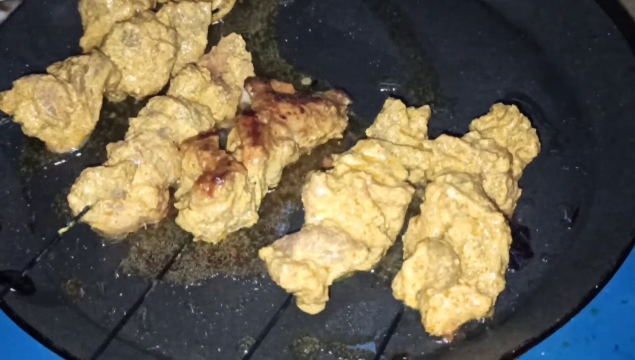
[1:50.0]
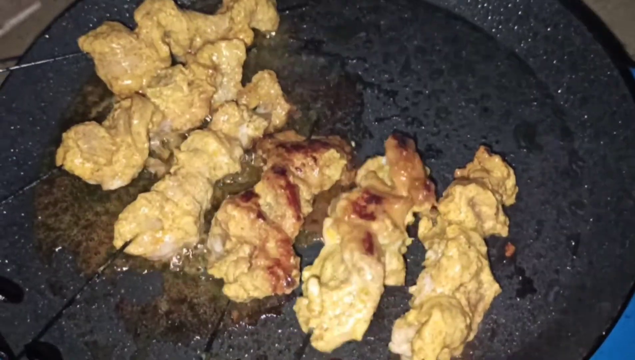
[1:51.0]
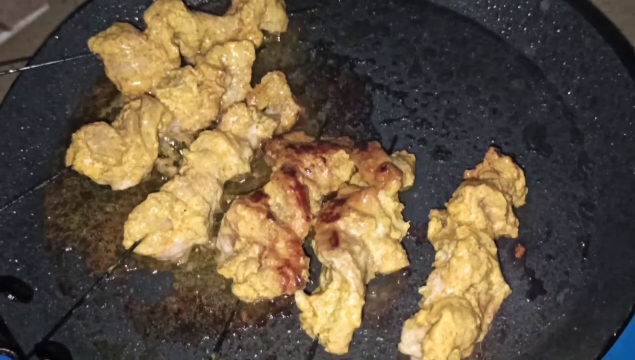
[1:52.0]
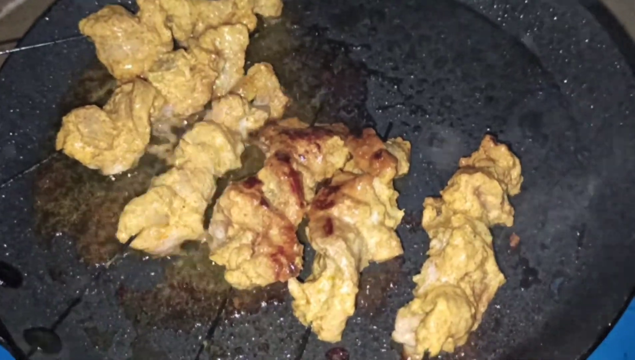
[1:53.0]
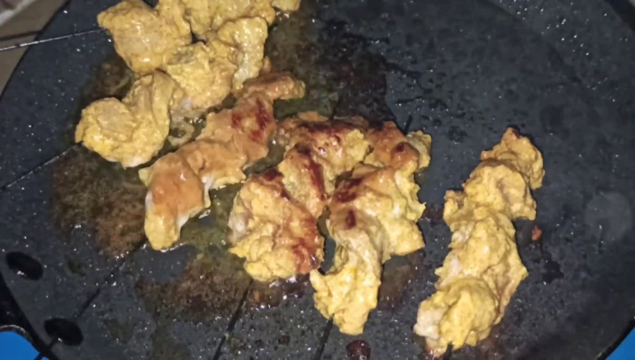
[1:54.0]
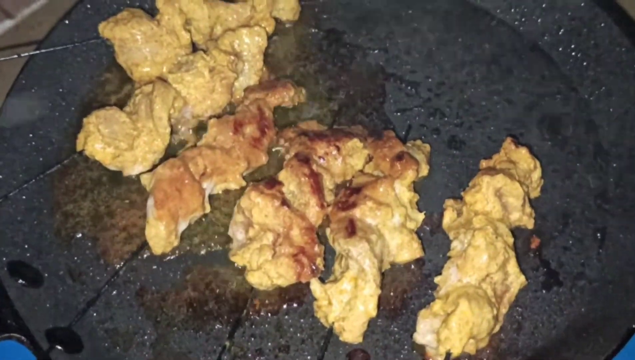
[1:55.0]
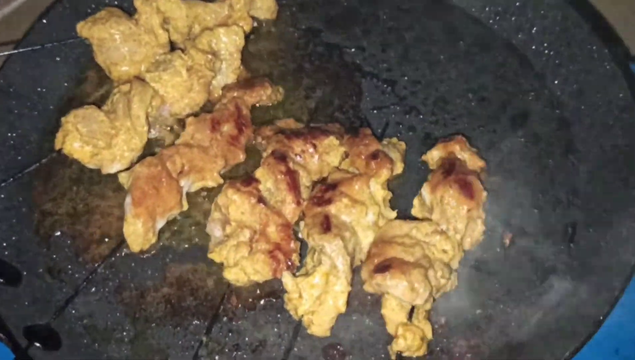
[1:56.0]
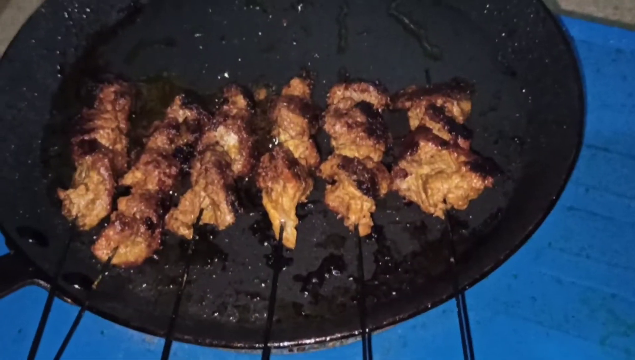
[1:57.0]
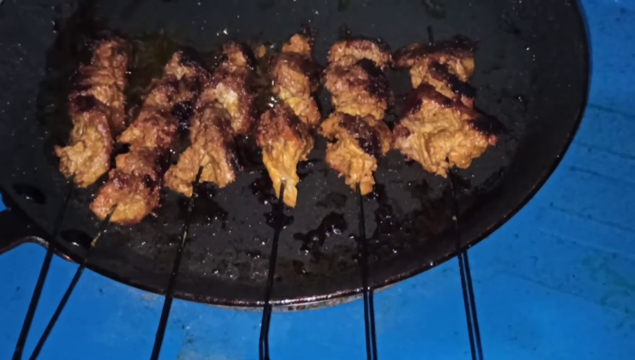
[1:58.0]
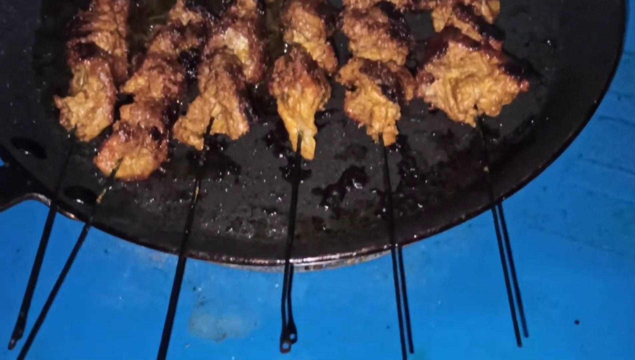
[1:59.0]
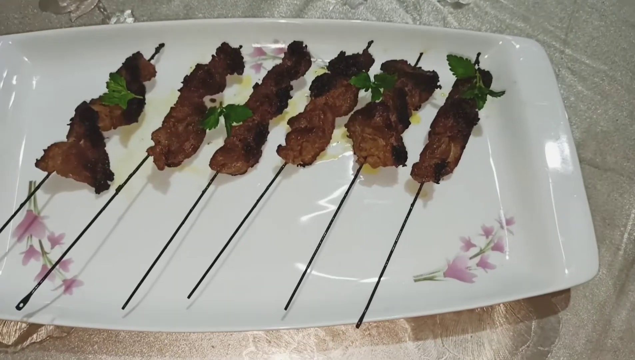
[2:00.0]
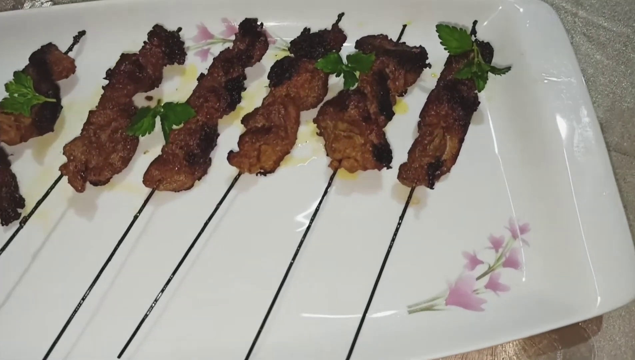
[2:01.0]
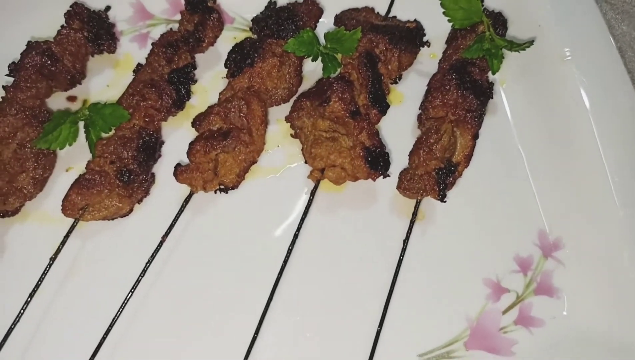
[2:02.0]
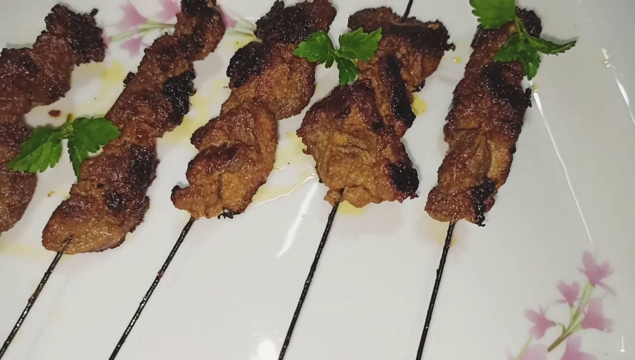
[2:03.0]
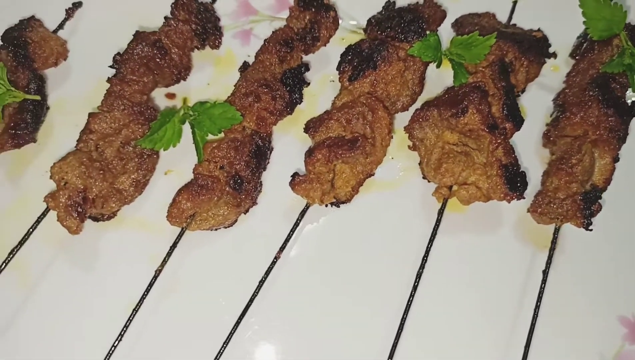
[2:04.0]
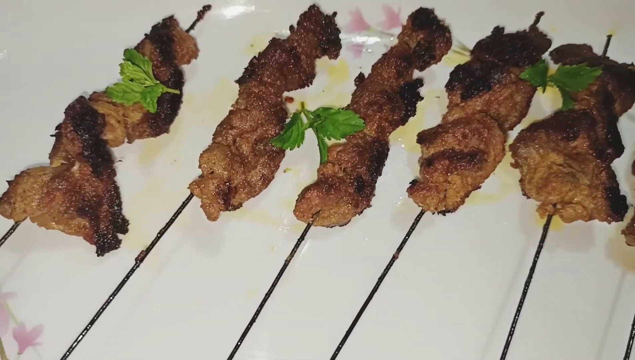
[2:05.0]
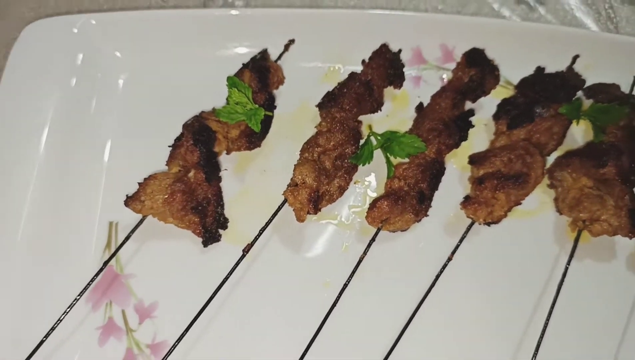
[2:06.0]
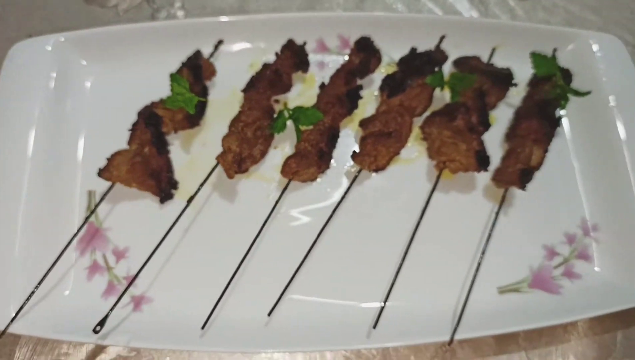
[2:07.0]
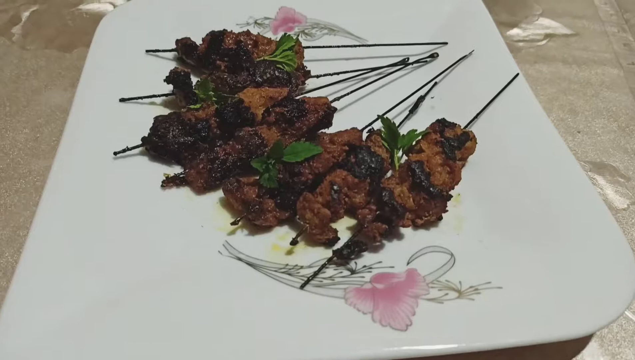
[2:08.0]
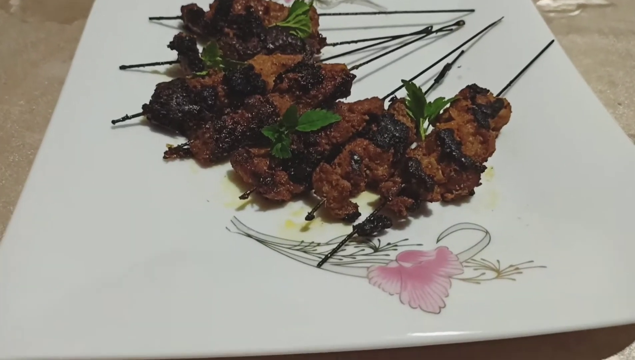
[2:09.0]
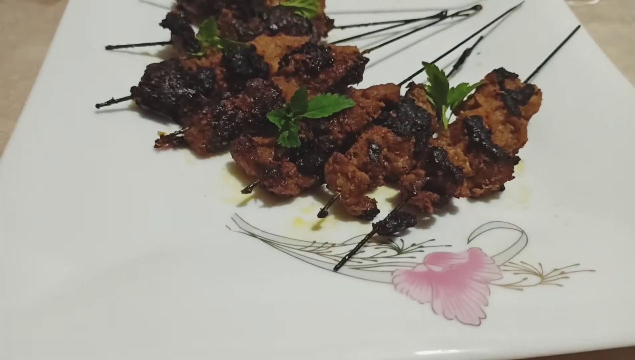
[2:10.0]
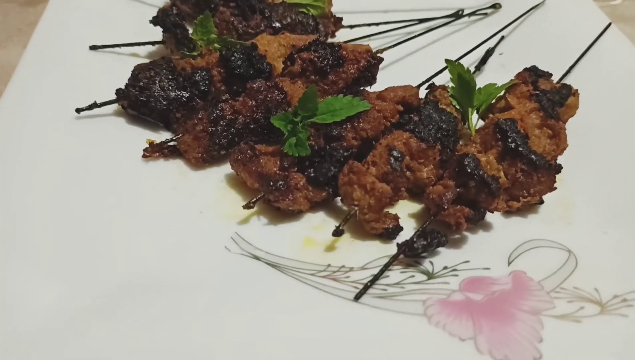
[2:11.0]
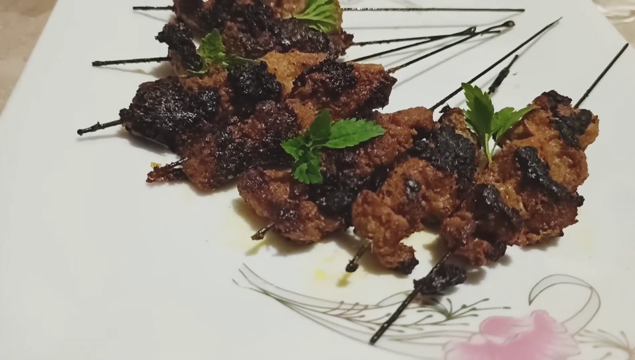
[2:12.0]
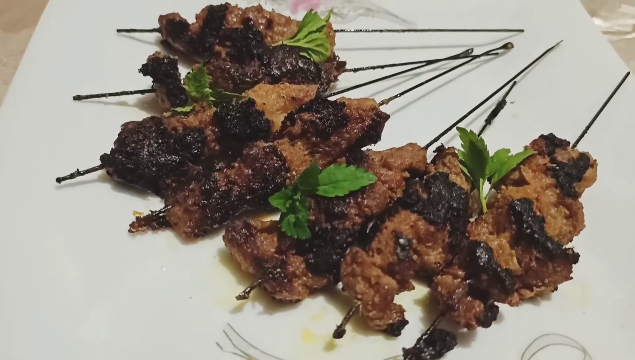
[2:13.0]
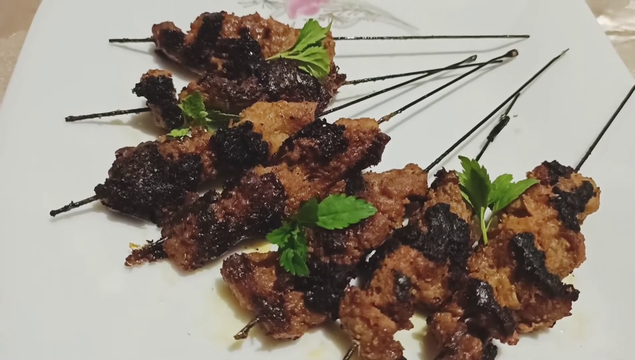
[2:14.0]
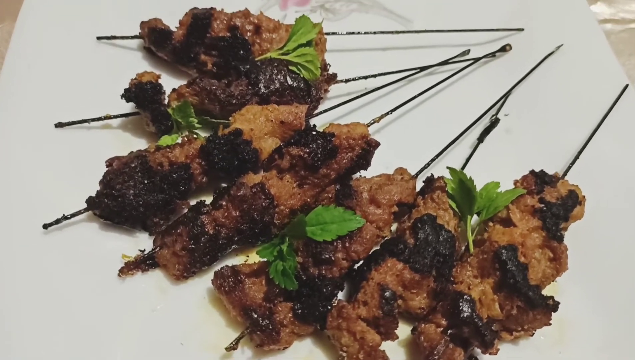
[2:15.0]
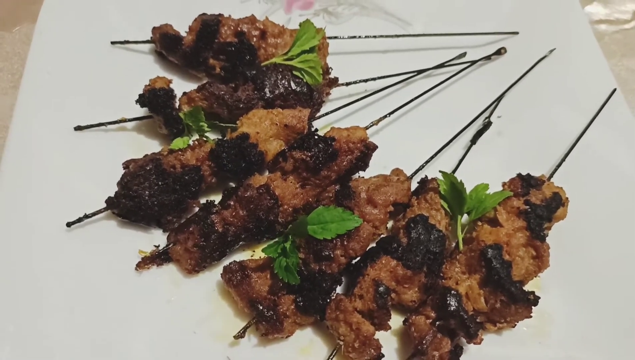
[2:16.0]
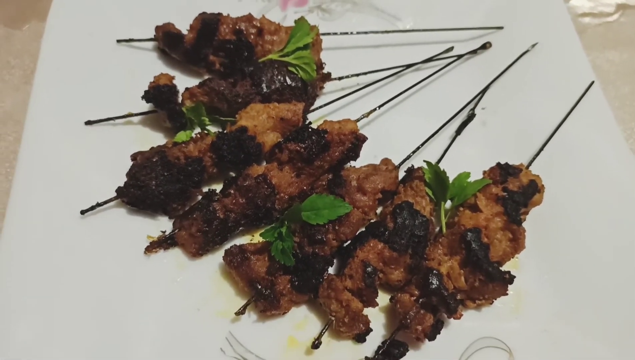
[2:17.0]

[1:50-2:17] Six meat skewers cook in a saucepan with a light coating of oil, and a person turns them one by one. Each long metal skewer holds several cuts of meat fillet on its end, and as they are turned, the backsides of the meat are seen to have begun browning and cooking. Oil pops and jumps from the meat cooking in the pan. The video then shows the finished skewers on the saucepan, six in total. It then shows all six skewers laid out on a long rectangular white tray with green leaf seasoning on top. The final segment shows seven skewers on a square white plate.